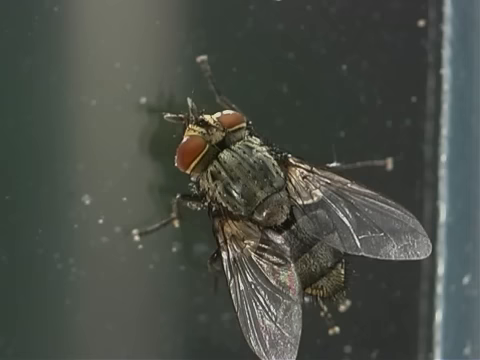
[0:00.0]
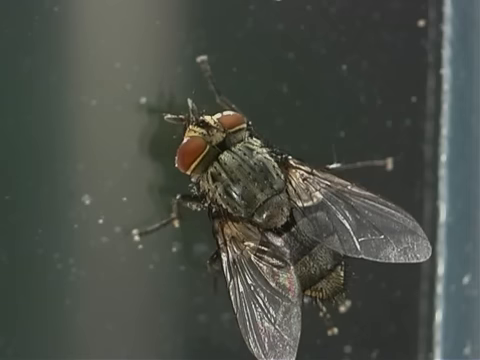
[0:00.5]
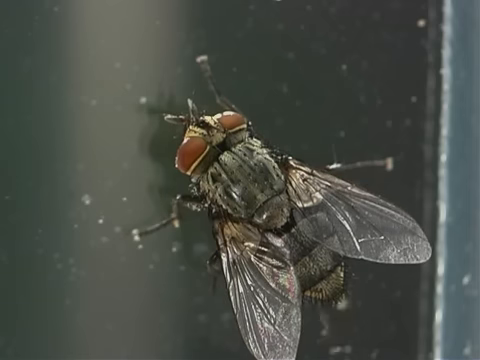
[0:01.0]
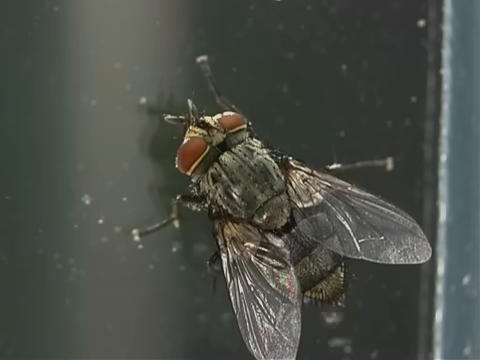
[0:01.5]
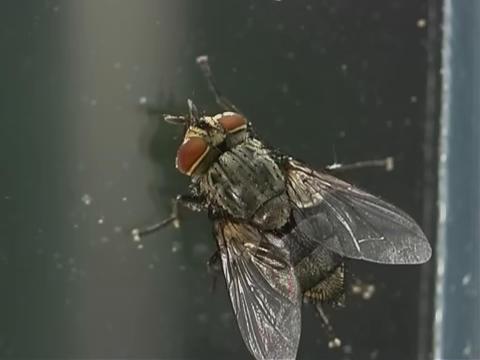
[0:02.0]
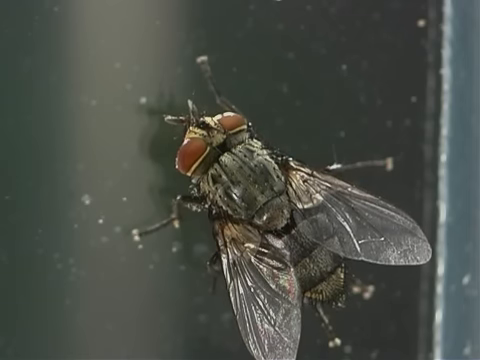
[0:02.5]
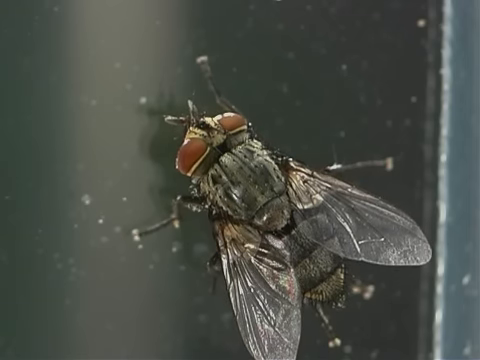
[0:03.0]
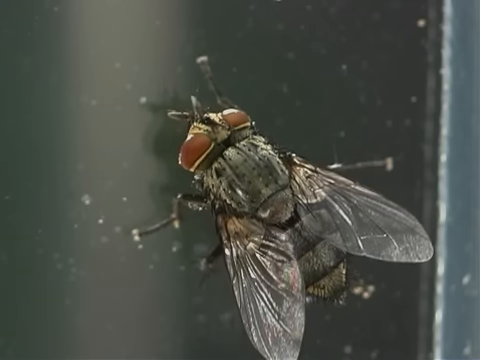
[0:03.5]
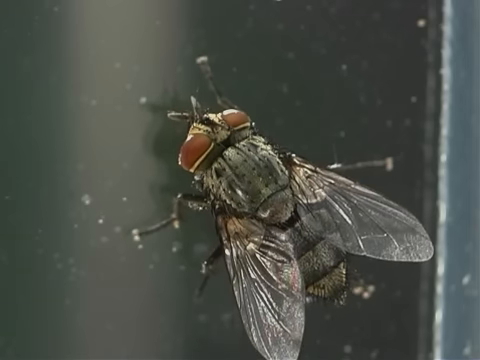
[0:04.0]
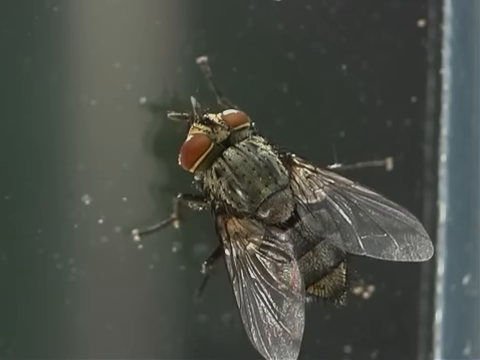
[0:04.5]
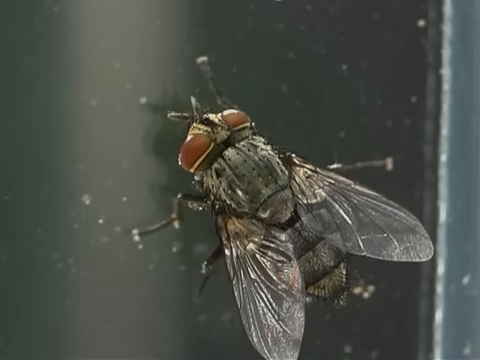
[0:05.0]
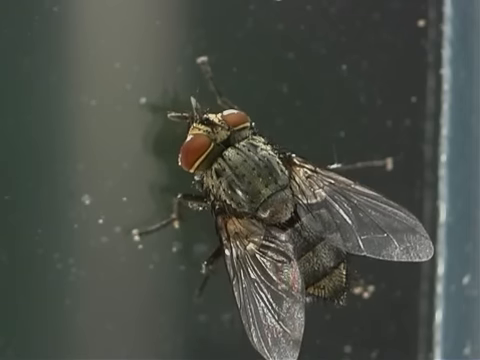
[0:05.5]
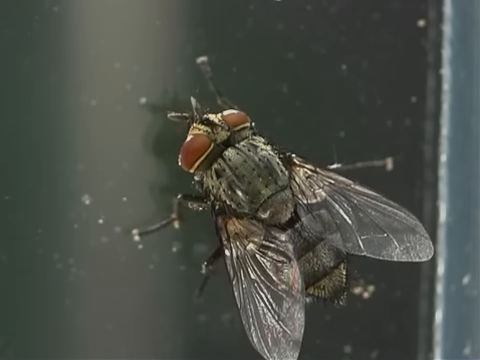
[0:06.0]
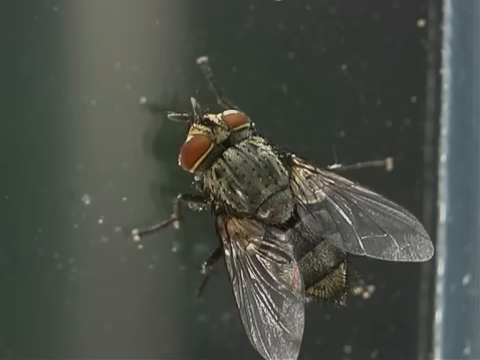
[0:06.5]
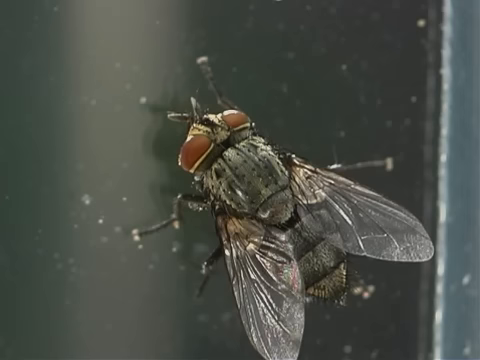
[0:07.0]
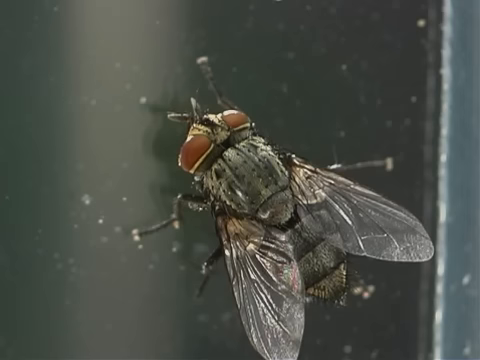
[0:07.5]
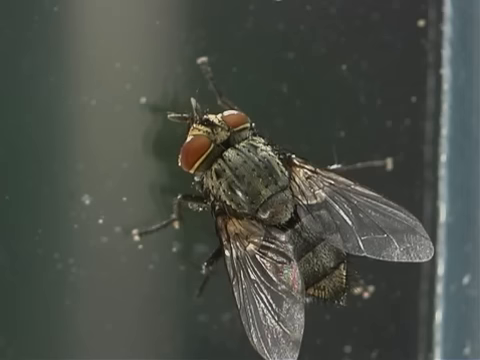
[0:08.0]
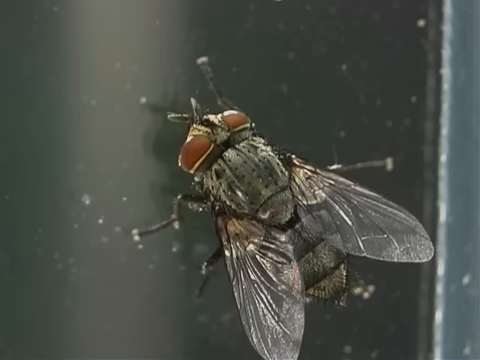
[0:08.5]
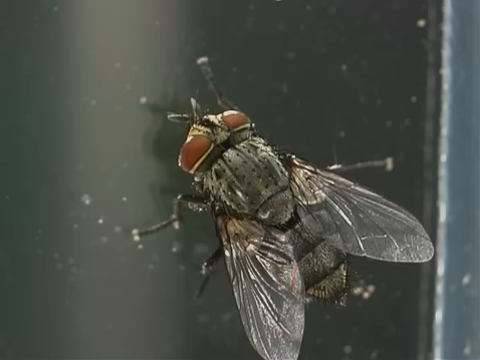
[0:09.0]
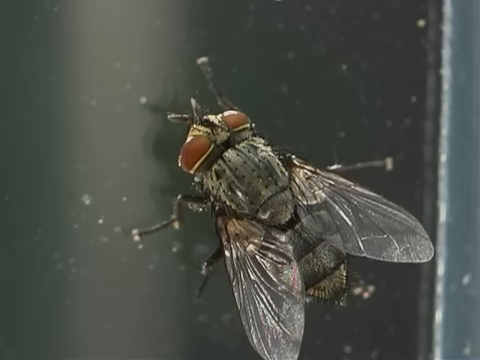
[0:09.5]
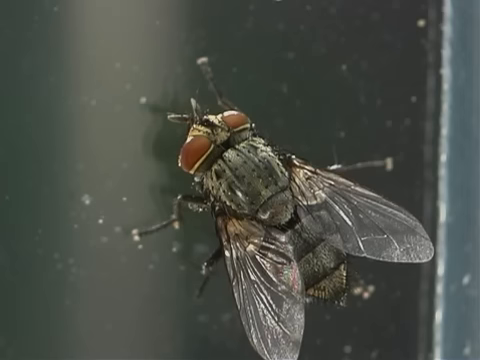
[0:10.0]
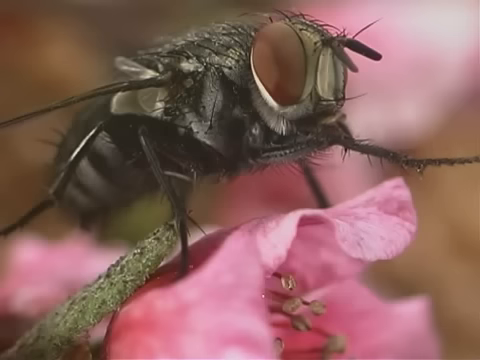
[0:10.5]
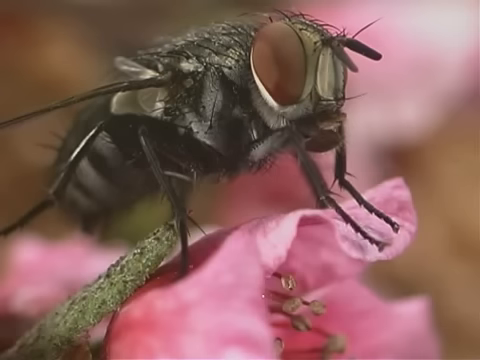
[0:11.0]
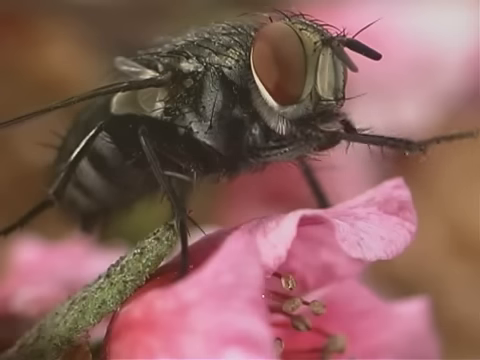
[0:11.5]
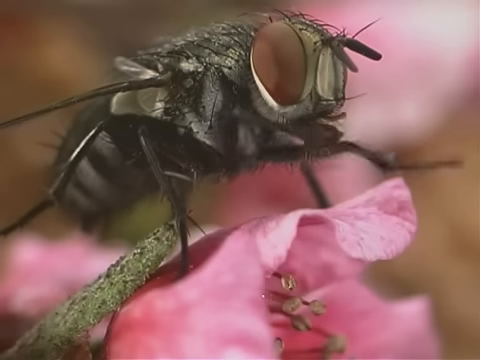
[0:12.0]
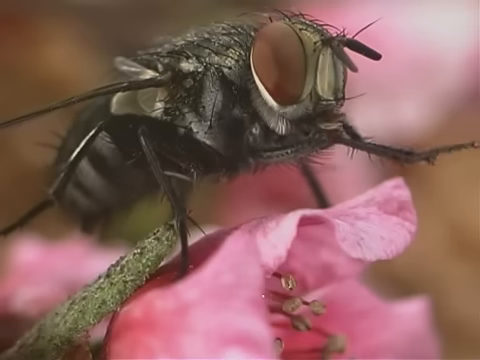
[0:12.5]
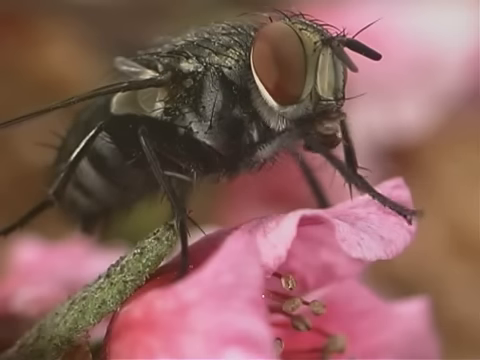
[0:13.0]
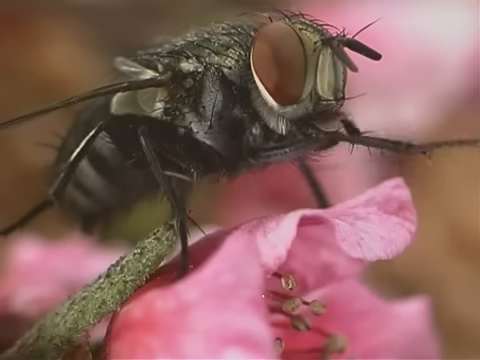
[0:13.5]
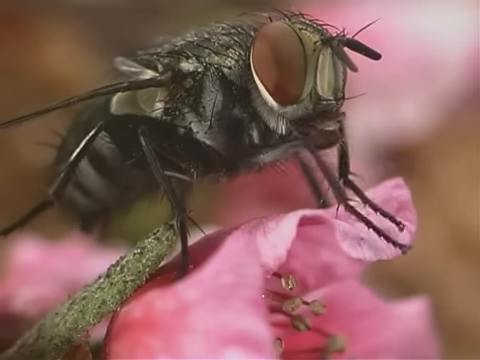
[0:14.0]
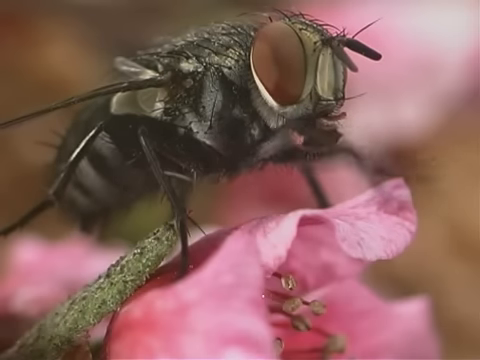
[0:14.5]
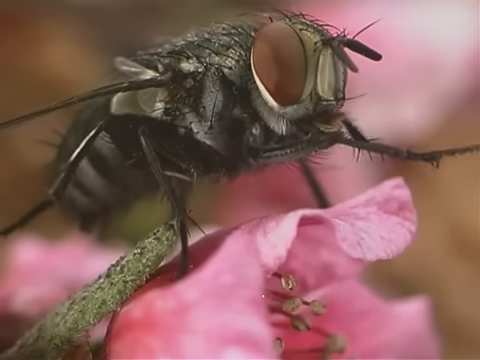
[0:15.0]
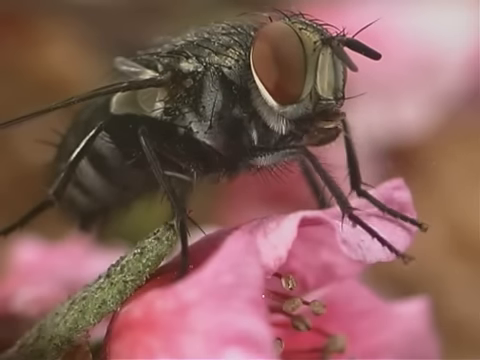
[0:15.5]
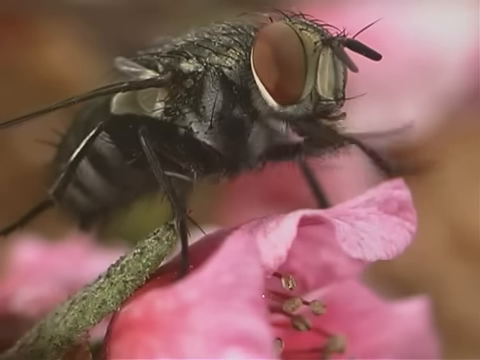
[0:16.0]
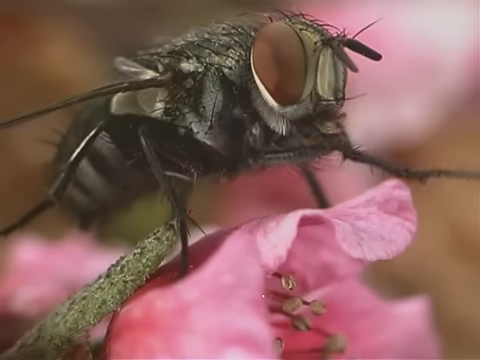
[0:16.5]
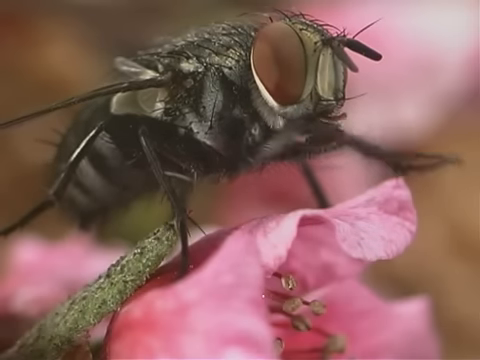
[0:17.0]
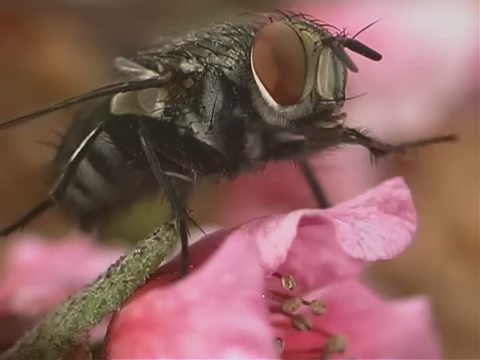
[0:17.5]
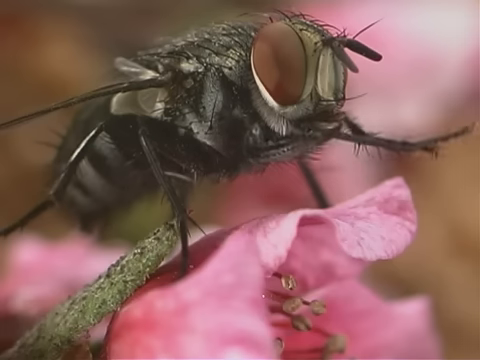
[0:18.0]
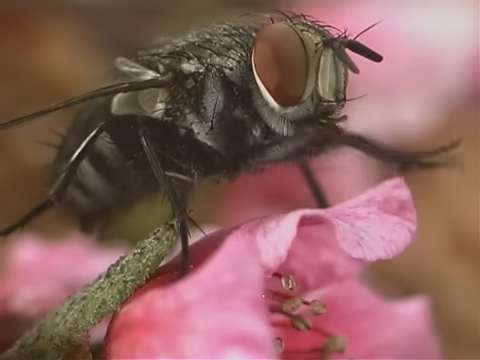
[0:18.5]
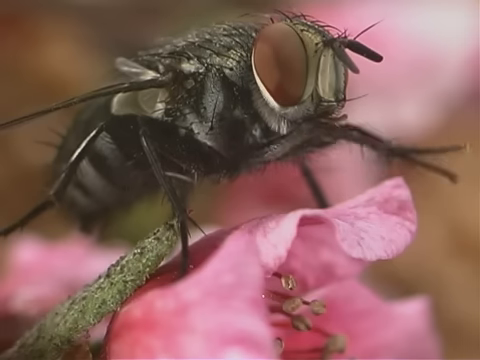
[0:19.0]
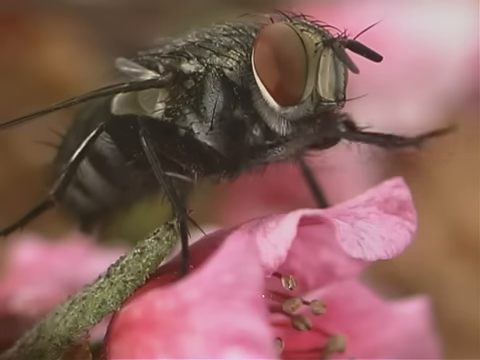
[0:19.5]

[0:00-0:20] A fly appears to be on a window. It has two wings on its back, three parts to its body, two eyes and six legs, though only four legs are visible at first. The two back legs then appear, moving very fast and rubbing together behind its body. The eyes are bright orange. The rest of the fly is a mixture of grey and black, and the top part of the body is a light green colour. The video then moves to another fly sitting on a pink flower that has some pollen inside it. This fly rubs its front two legs together very fast. It has six legs, and one of its large orange eyes is visible. A little black and a little grey antenna-like thing comes out of the top of its head, and there are little bits of hair over its back, along with its wings.